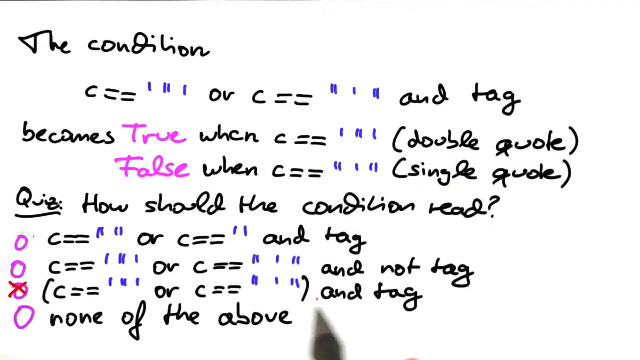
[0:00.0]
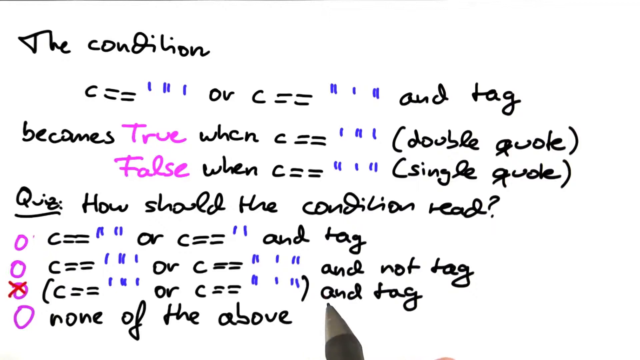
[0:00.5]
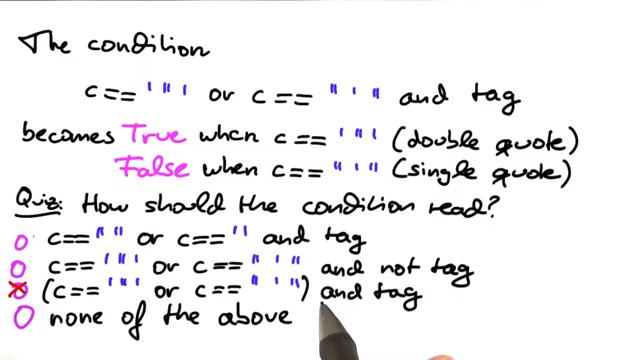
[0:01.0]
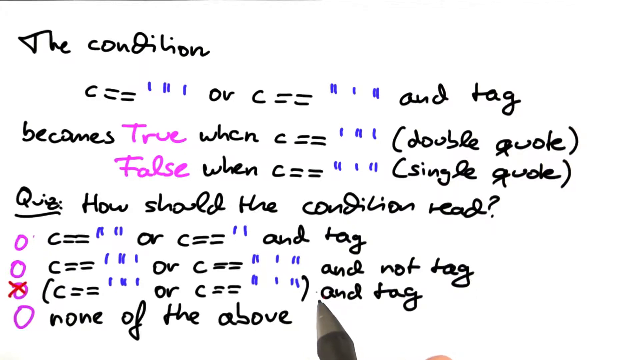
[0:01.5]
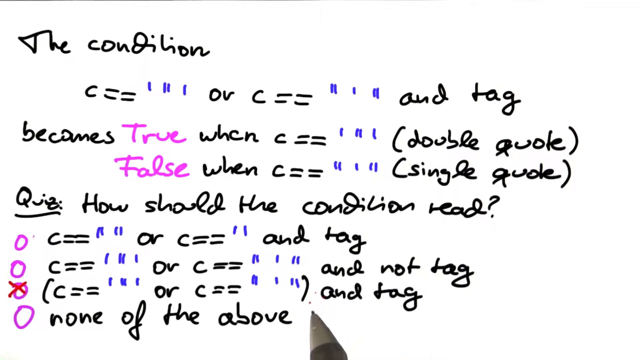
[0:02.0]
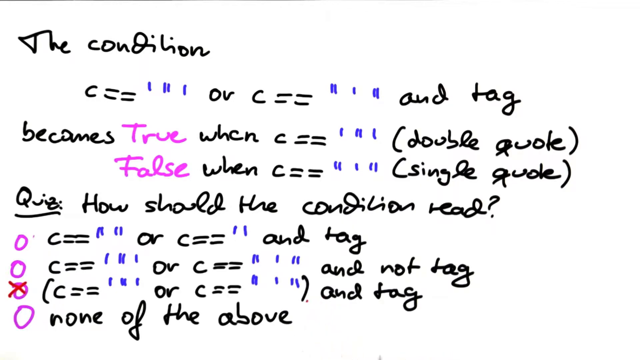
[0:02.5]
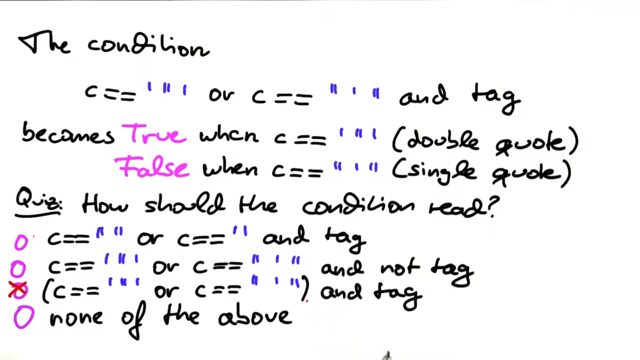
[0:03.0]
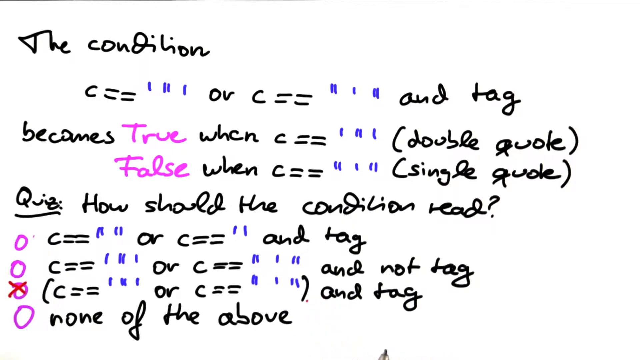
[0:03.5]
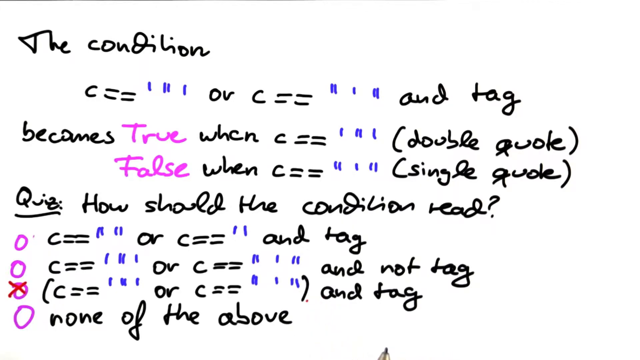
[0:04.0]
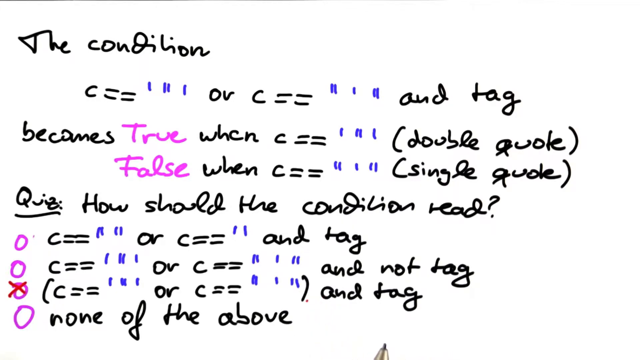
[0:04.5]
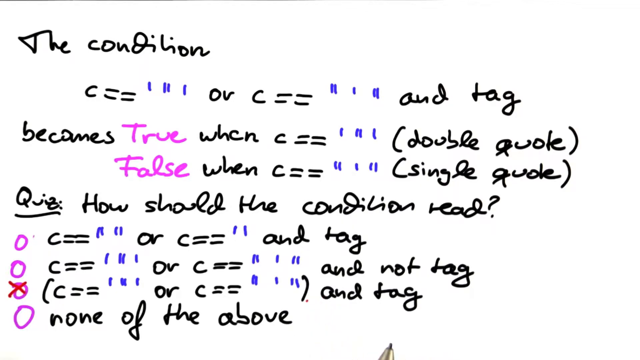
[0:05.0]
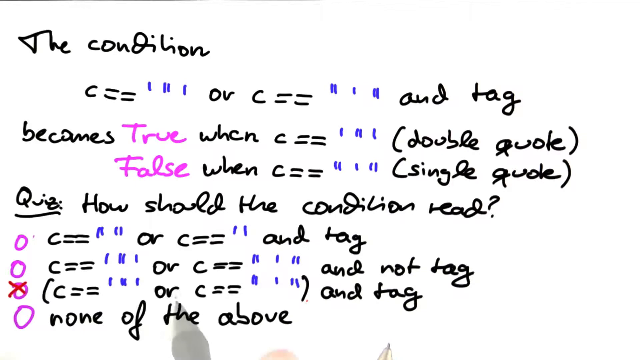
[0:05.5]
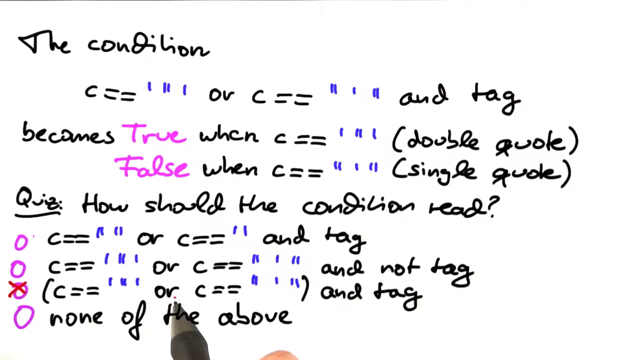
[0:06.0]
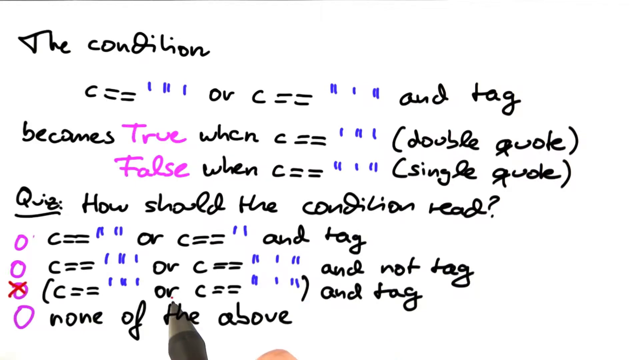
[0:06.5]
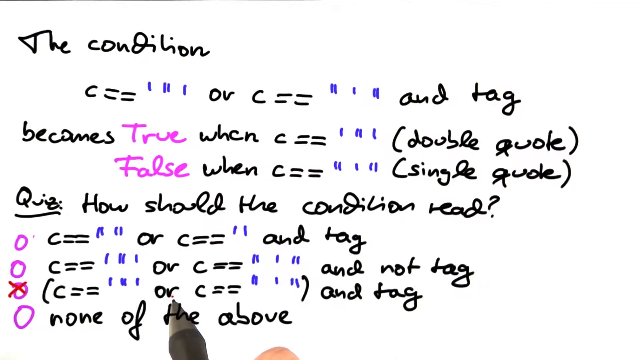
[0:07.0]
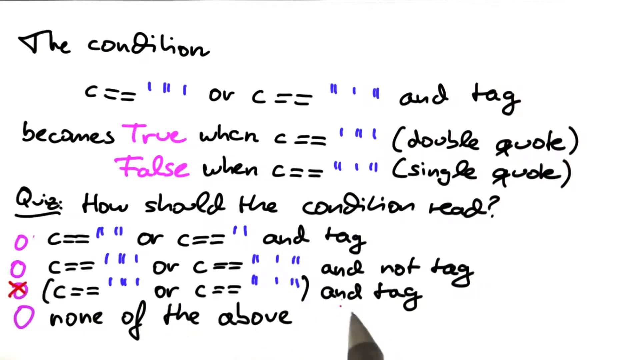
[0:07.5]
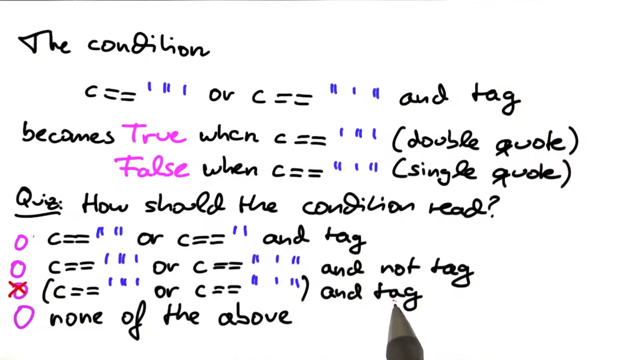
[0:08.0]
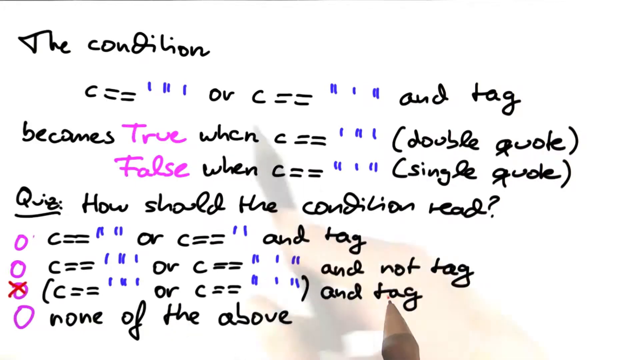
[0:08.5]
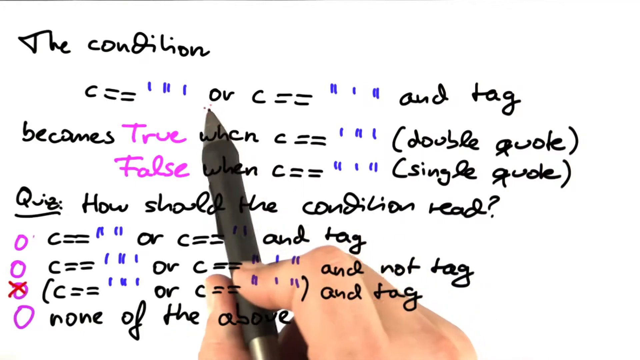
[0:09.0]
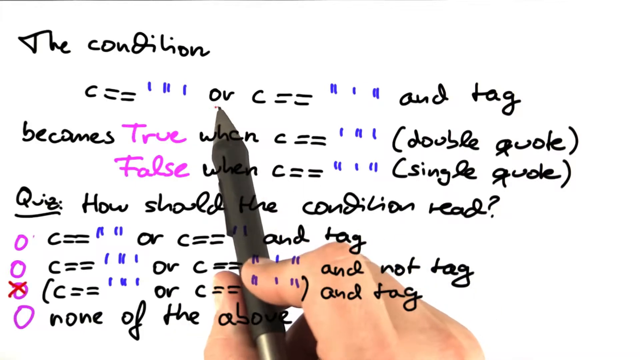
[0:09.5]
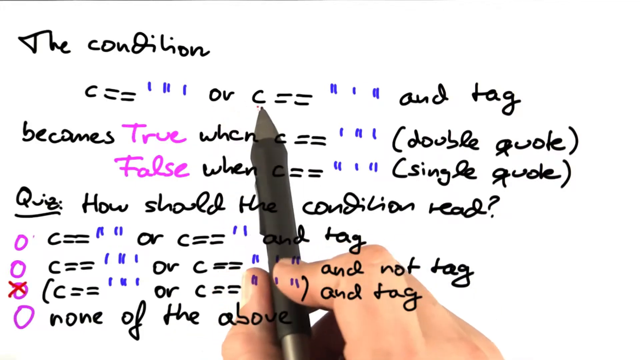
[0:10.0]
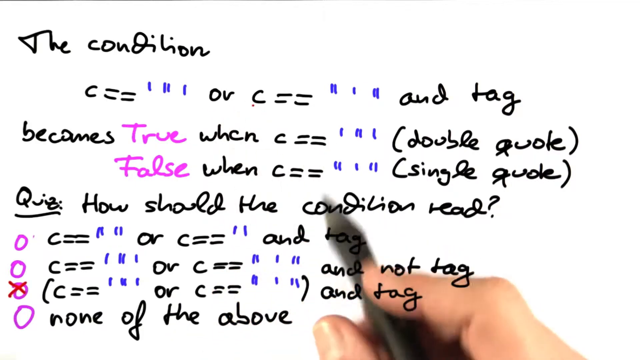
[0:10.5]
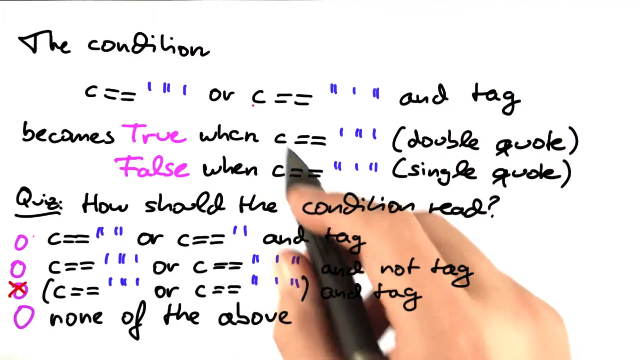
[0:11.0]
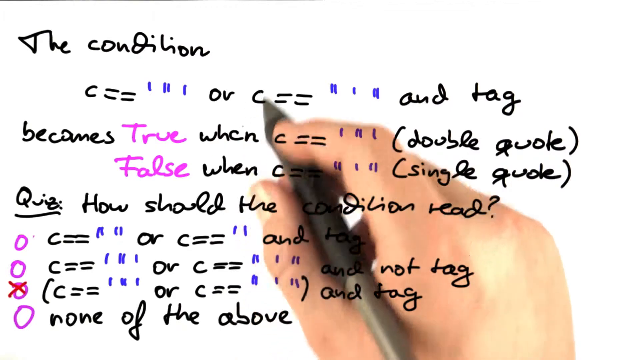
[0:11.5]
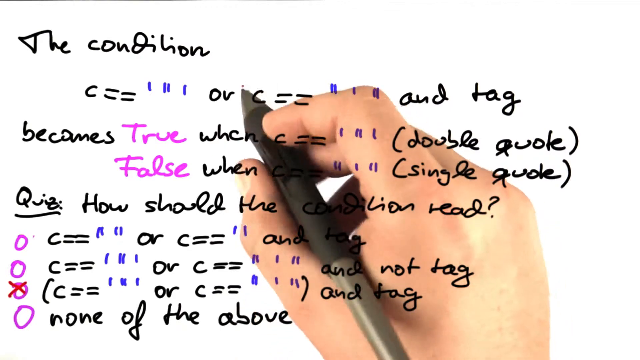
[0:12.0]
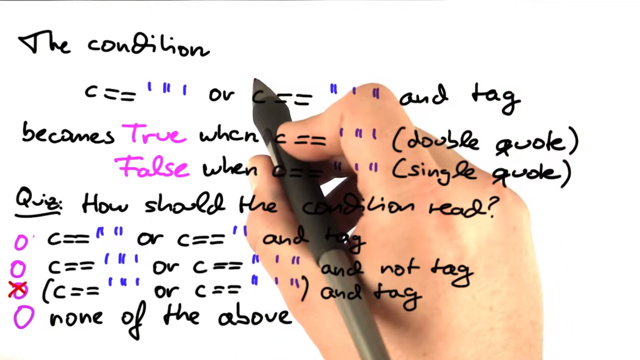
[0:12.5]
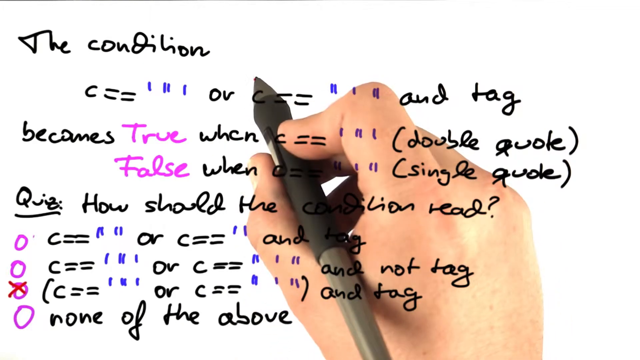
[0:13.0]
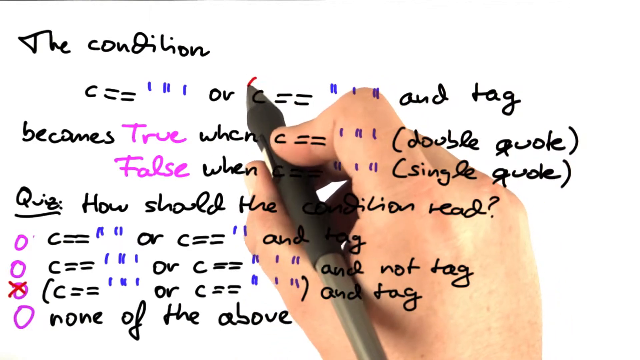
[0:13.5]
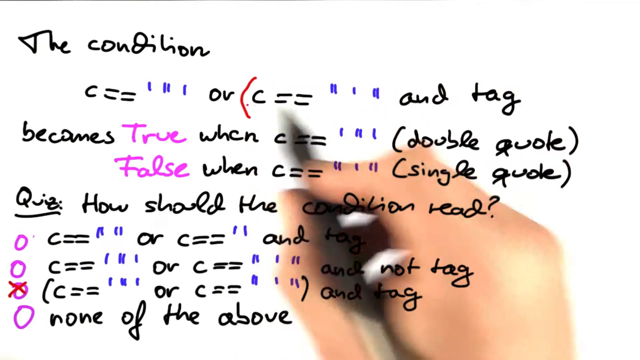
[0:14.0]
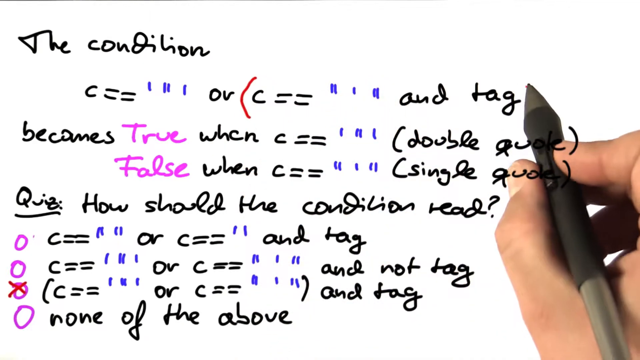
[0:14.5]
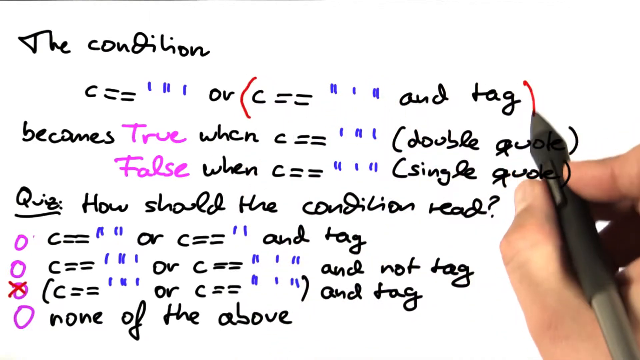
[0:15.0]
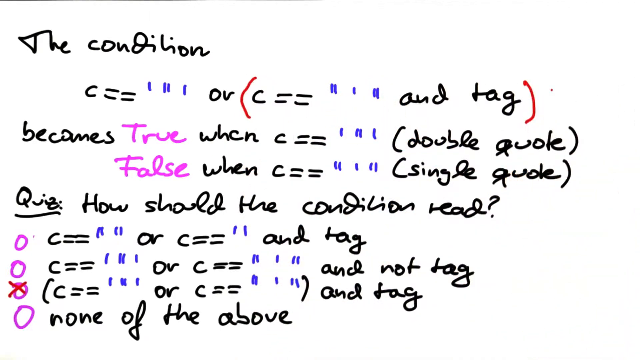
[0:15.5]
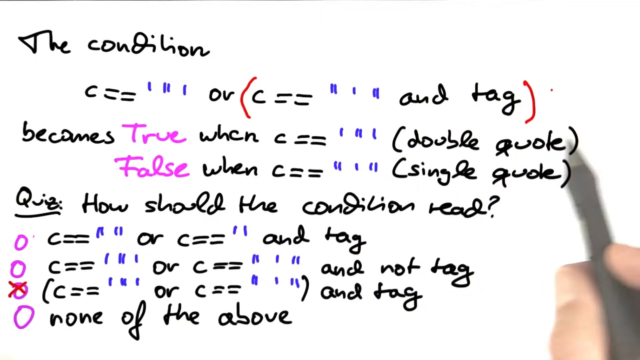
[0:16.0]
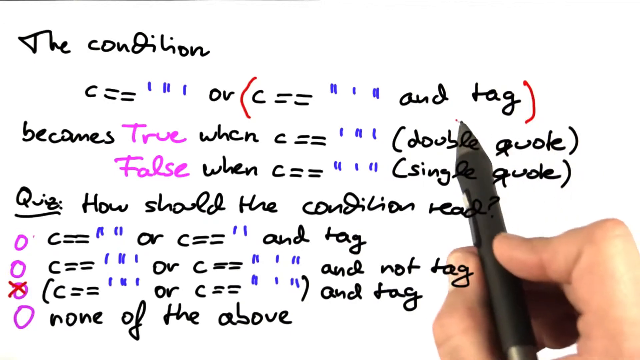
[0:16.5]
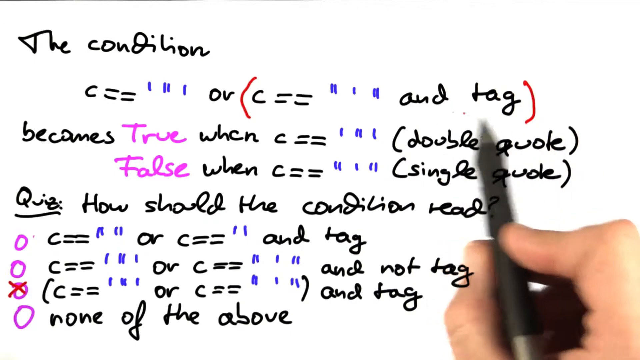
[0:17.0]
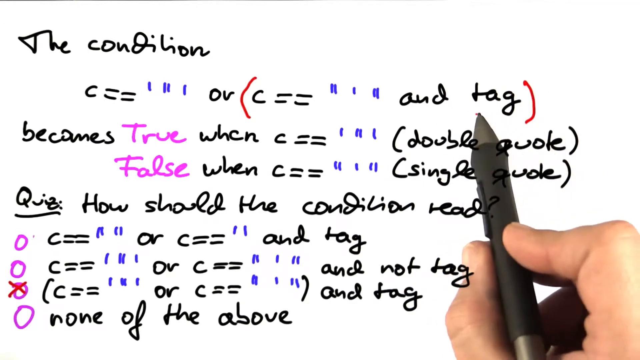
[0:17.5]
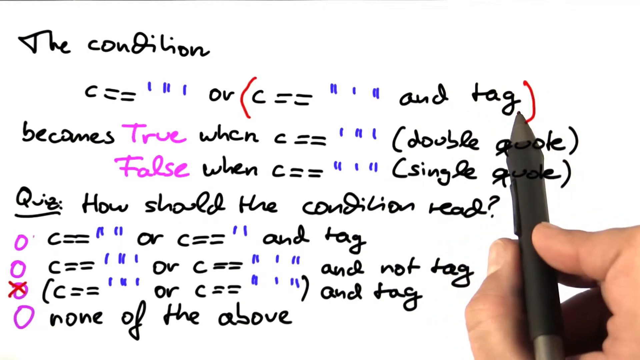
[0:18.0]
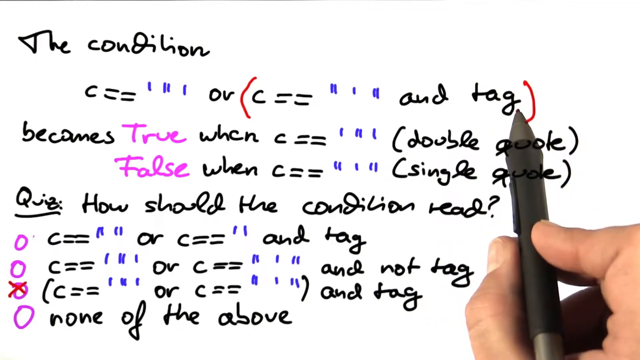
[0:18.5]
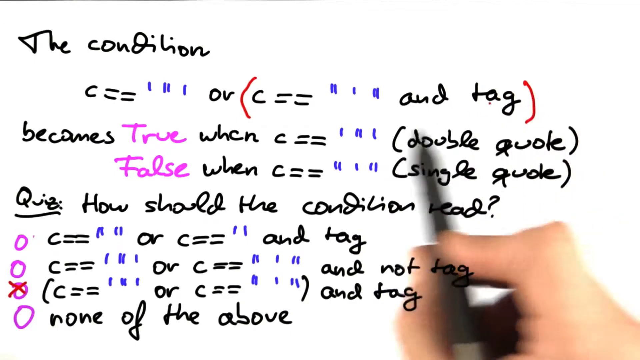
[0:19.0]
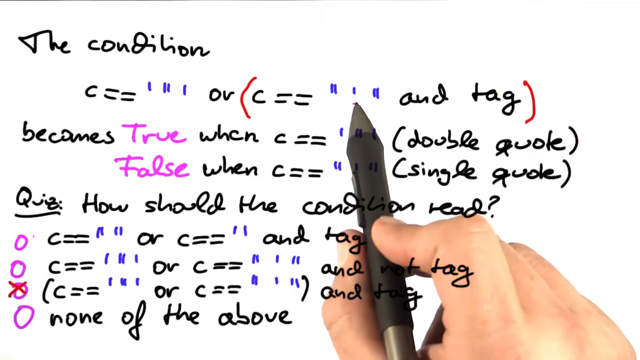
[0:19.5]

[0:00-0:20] The video opens on a white background. In the top left, black text reads "the condition". Below it, under the C, is another C in black with two equal signs, followed by one vertical blue line, then two vertical lines, then one more blue line. Next comes "or C" with two equal signs in black, then two vertical lines, one line, and two more in blue, then "tag" in black. The next line down says "becomes". Starting on the left, "true" is in purple with "false" below it. Next to both is "when C" with two equal signs in black. On the true line there is one line, then two, then one; on the false line there are two lines, one blue line, then two lines, all vertical. On the top line it says "double quote" in soft brackets, and on the next one down "single quote" in soft brackets. An ink pen toward the bottom is kind of pointing at some of the text, then at "tag", and it goes up toward the top. The pen has a silver tip, silver casing, and a black grip. The pointer finger is on top of it and the thumb is to the side, while the other fingers are kind of curled under and can't really be seen; the top of the pointer finger, the side of the thumb, and a little of the back of the hand are visible. Soft brackets are put on the top line, on the second C and on "tag".